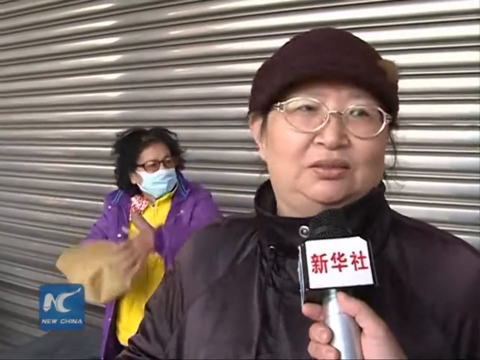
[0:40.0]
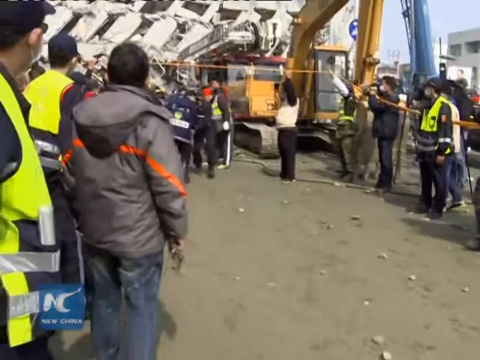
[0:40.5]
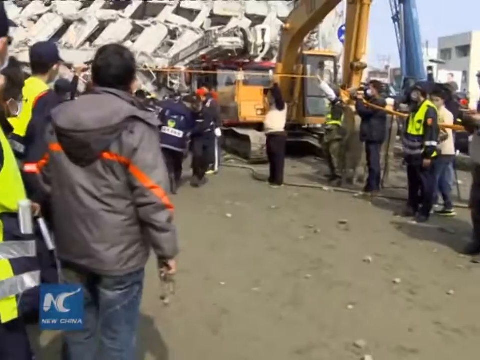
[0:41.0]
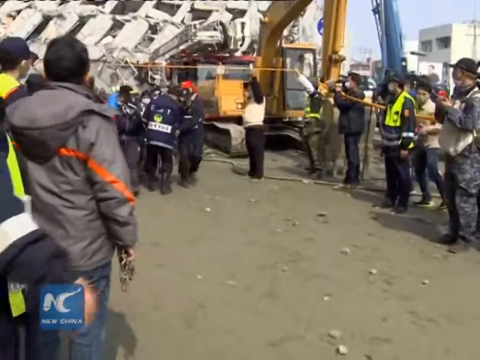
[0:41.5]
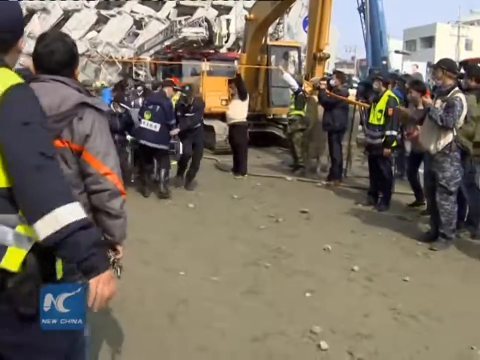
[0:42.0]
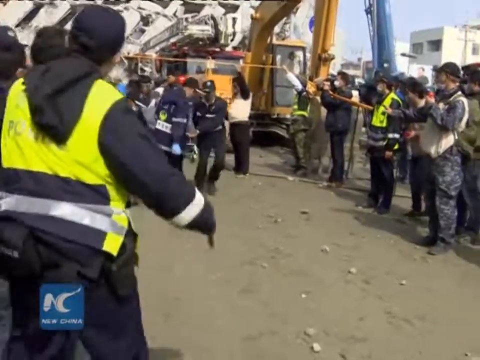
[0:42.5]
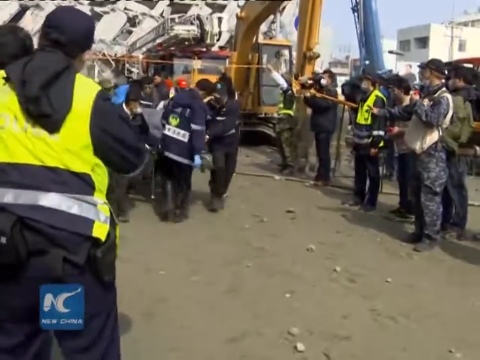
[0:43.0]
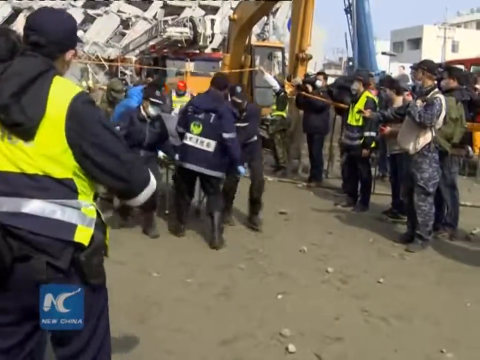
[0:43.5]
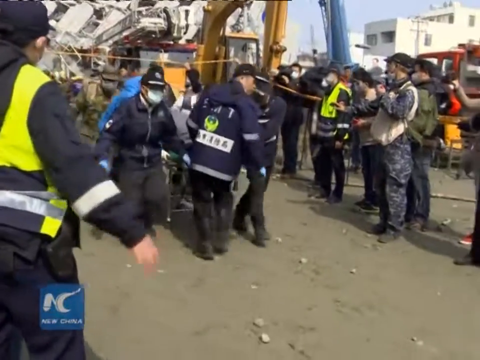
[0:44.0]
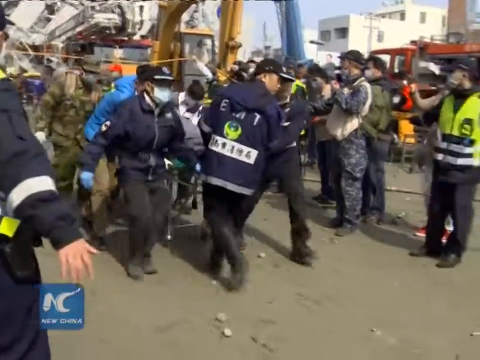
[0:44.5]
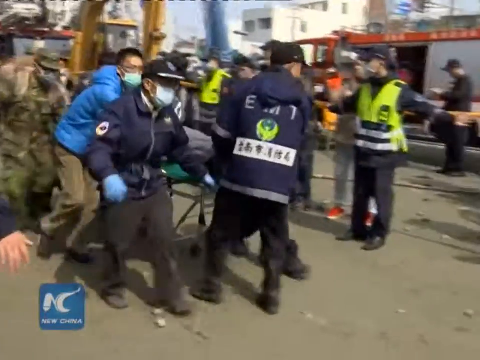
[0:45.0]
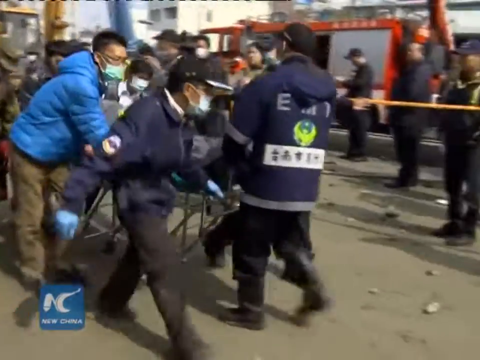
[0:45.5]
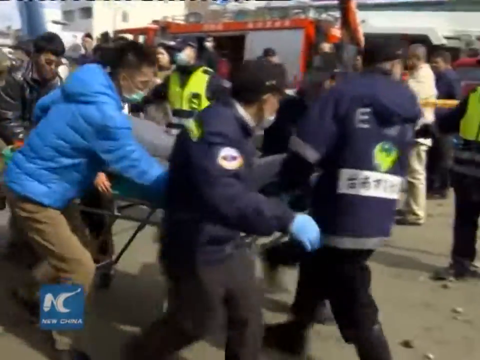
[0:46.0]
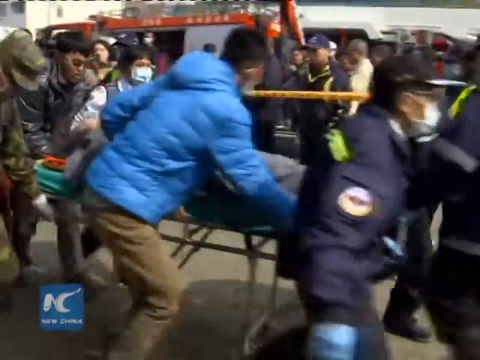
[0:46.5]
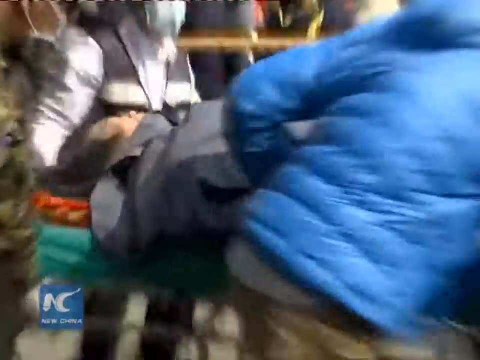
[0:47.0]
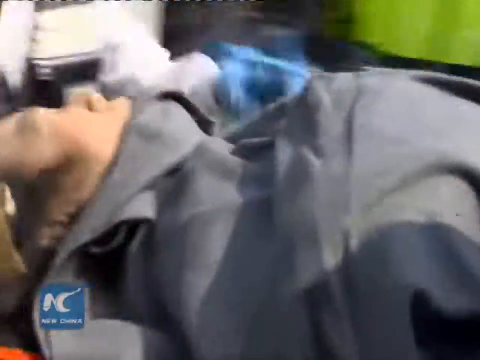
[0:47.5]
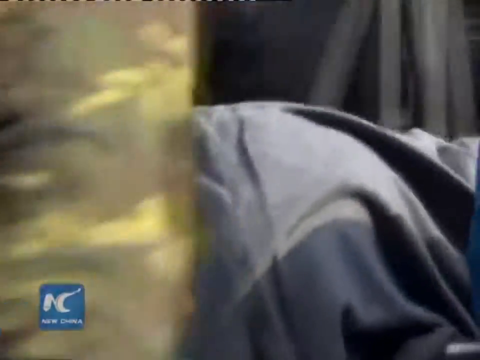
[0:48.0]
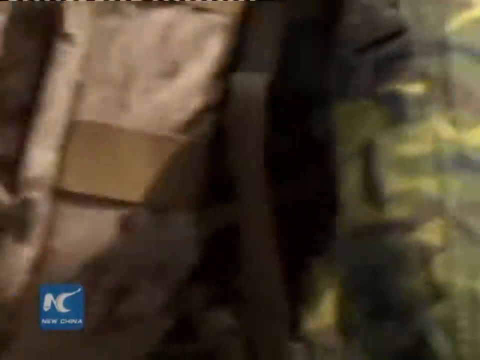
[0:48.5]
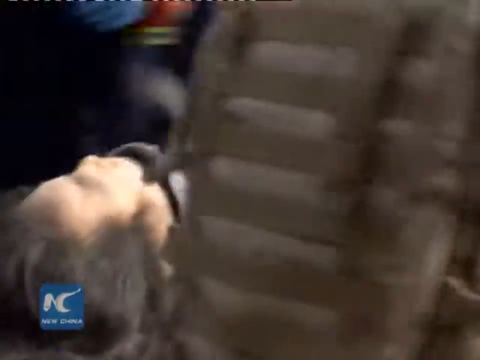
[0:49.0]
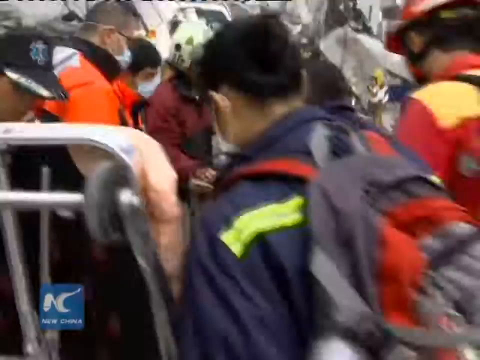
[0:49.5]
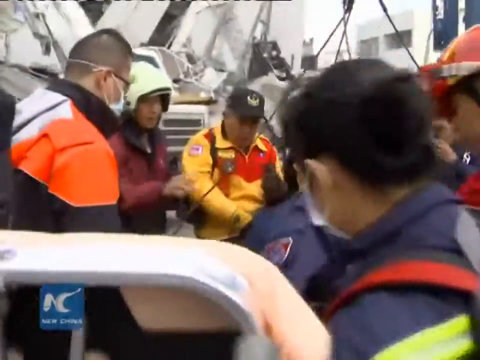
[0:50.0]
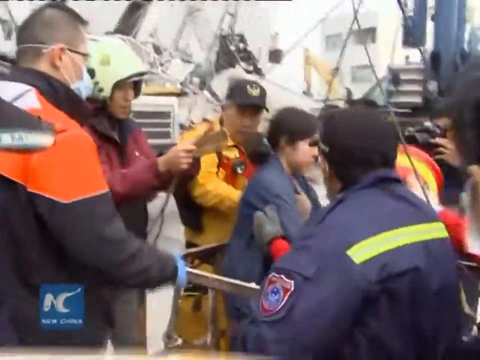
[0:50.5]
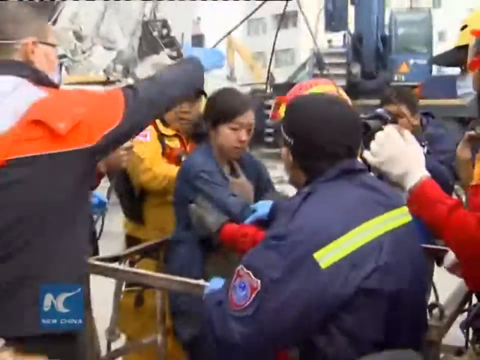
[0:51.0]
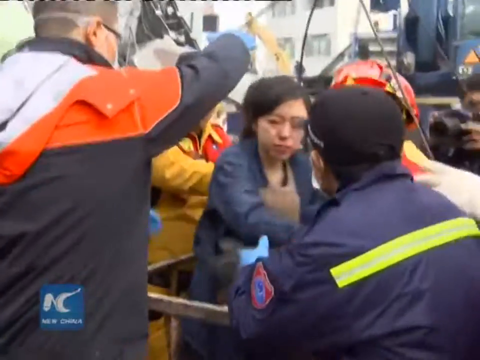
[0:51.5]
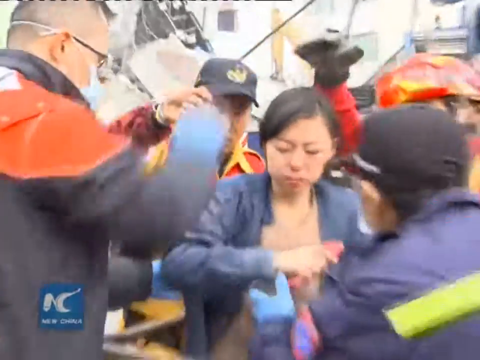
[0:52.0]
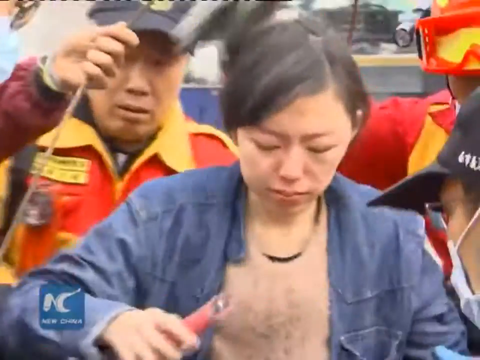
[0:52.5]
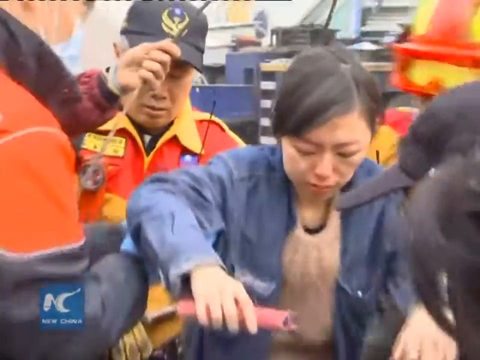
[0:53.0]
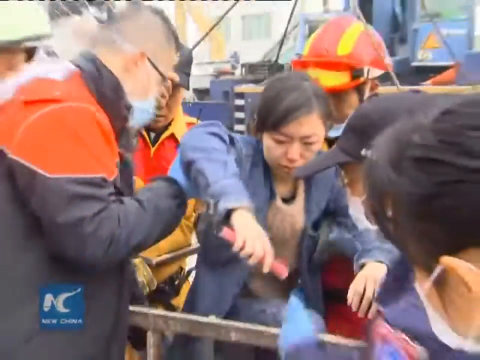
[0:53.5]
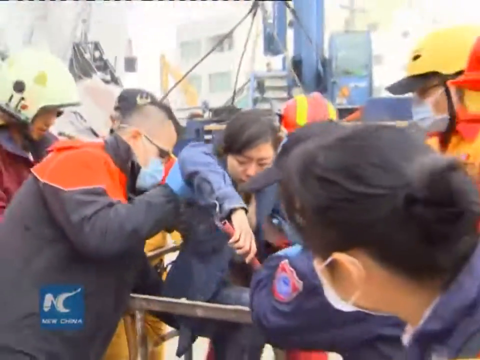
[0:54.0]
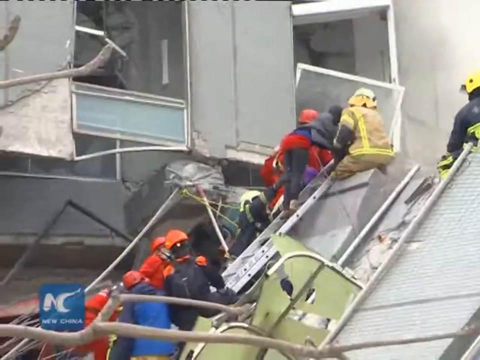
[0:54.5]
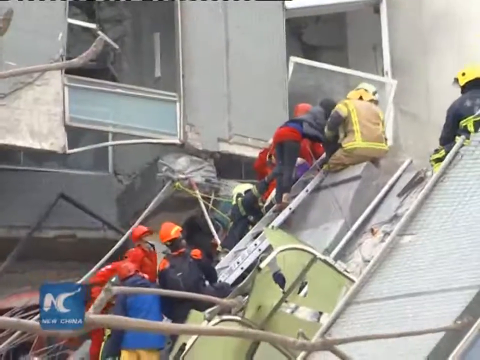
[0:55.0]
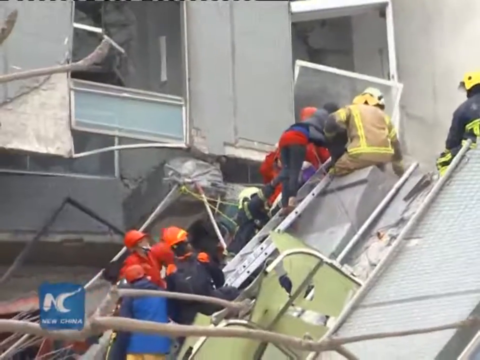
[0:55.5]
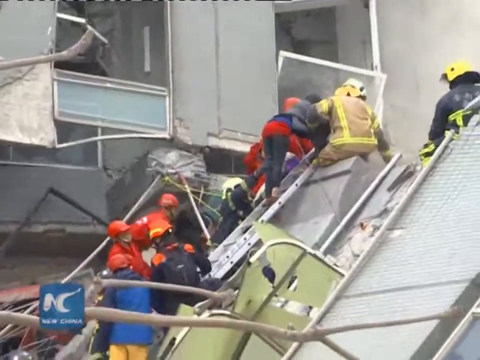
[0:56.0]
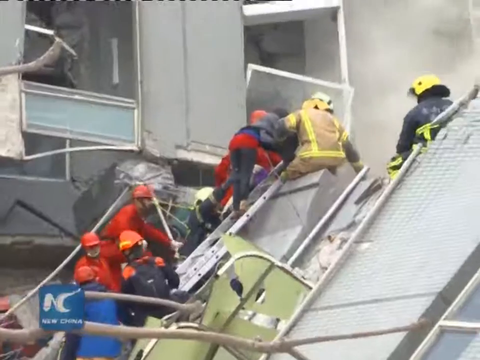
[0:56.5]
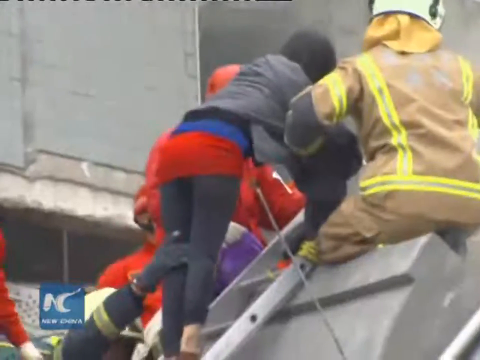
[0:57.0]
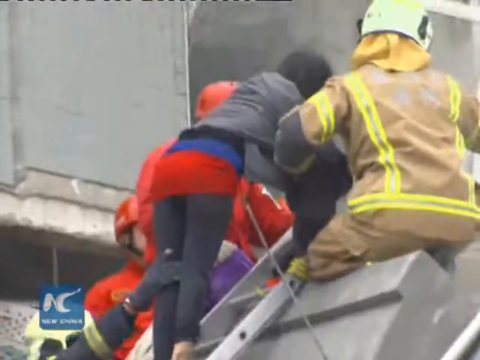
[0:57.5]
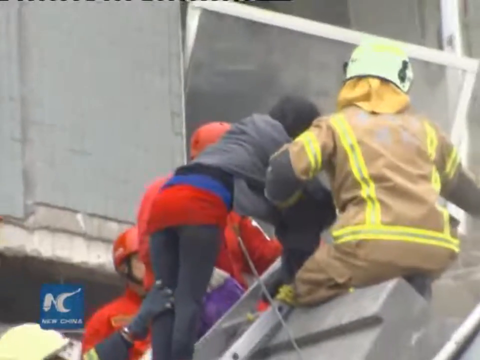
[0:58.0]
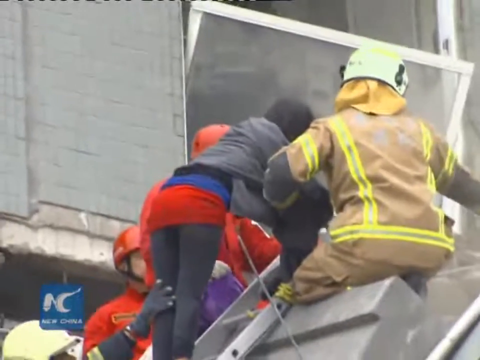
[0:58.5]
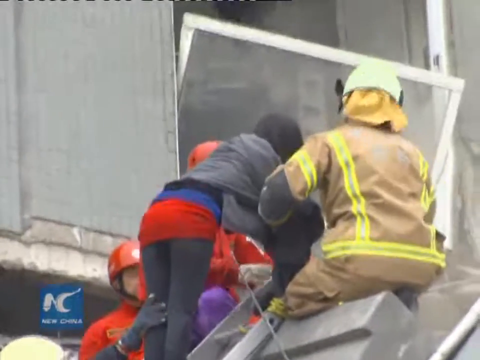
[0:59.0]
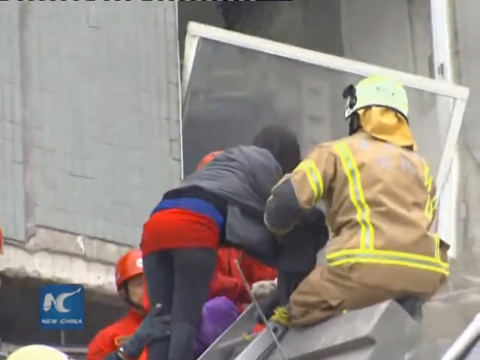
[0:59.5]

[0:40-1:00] A crowd is gathered in front of a collapsed building while emergency responders carry somebody out on a stretcher. A crane is parked in front of the building. The video cuts to a close shot of emergency responders attending to someone who has probably just been carried out of the collapsed building. A woman holds a pink item and seems to be pouring something from it onto the individual on the stretcher, probably as first aid. Emergency responders are then beside the collapsed building; some stand on a ladder while others sit on parts of the building. A close shot of some of these responders shows virtually everyone wearing a helmet. A woman stands among them, and a man holds her left leg, probably to support her.